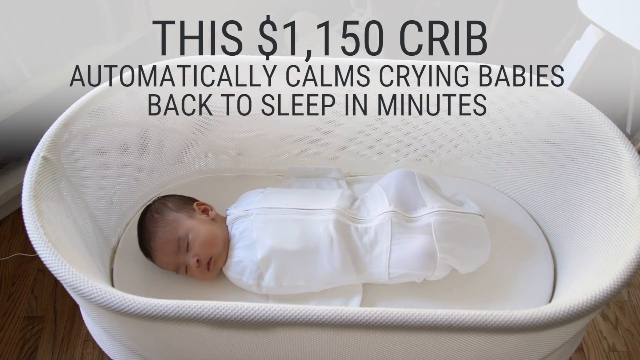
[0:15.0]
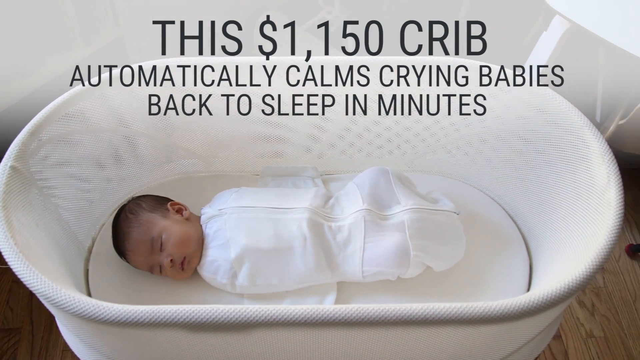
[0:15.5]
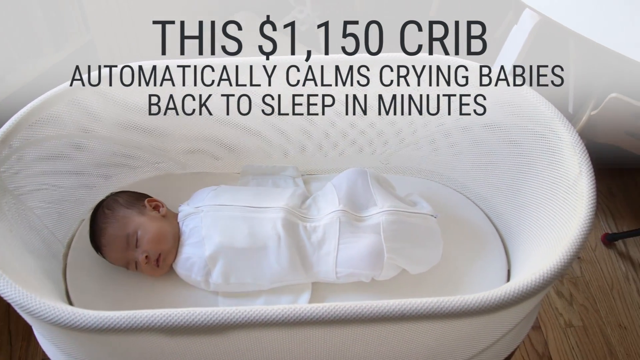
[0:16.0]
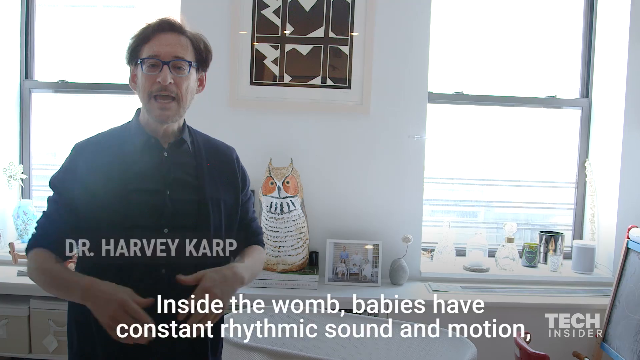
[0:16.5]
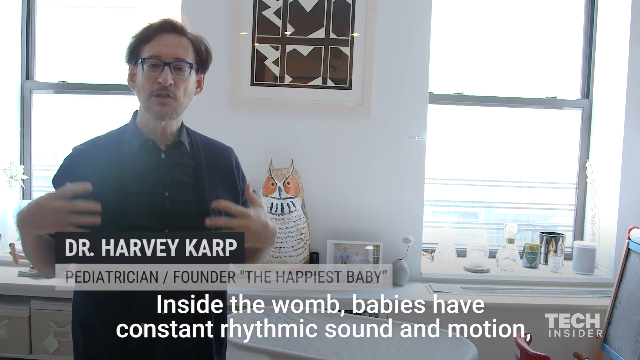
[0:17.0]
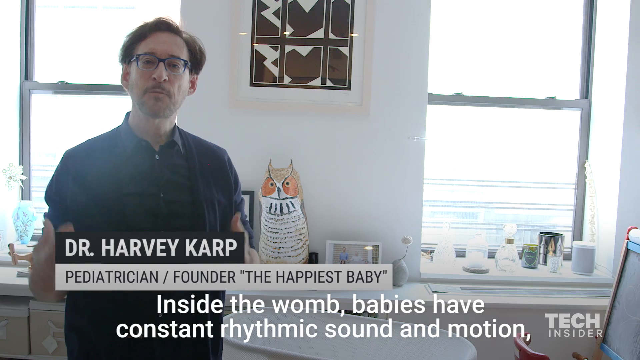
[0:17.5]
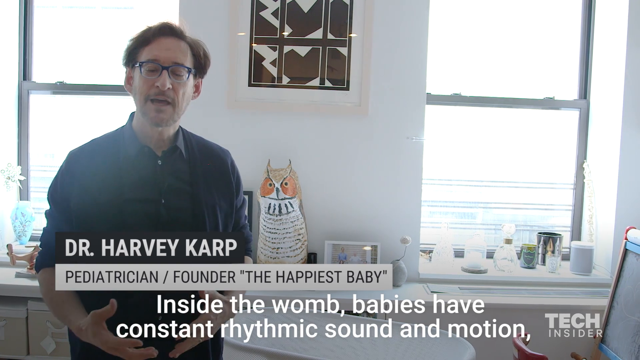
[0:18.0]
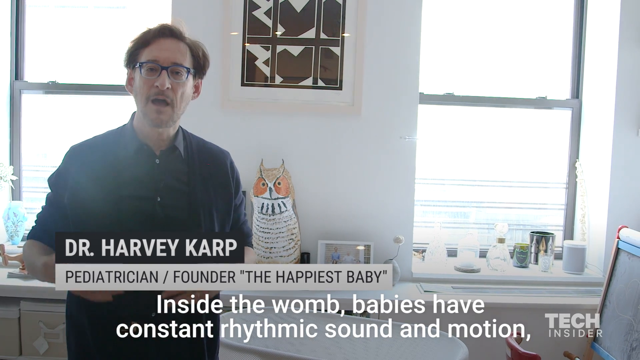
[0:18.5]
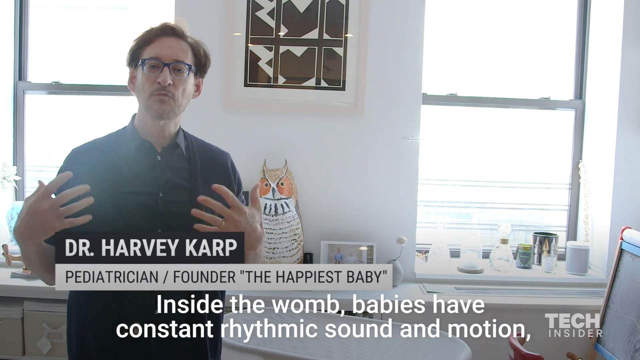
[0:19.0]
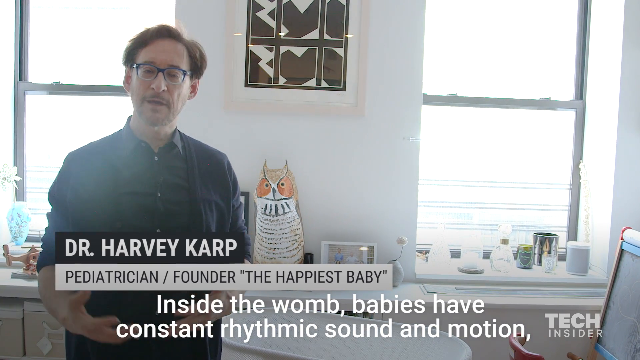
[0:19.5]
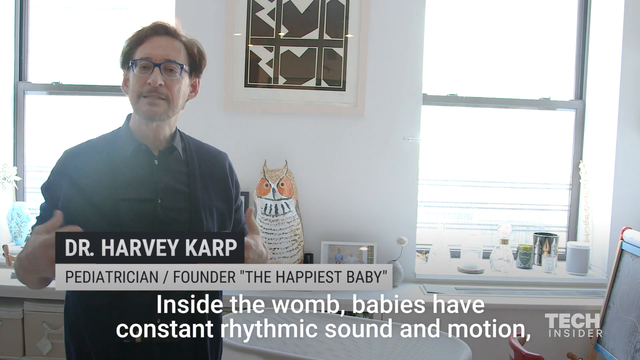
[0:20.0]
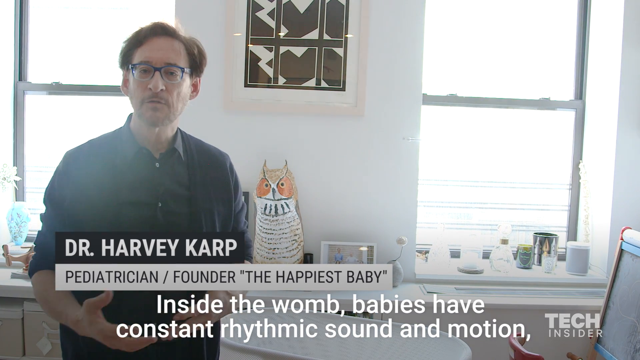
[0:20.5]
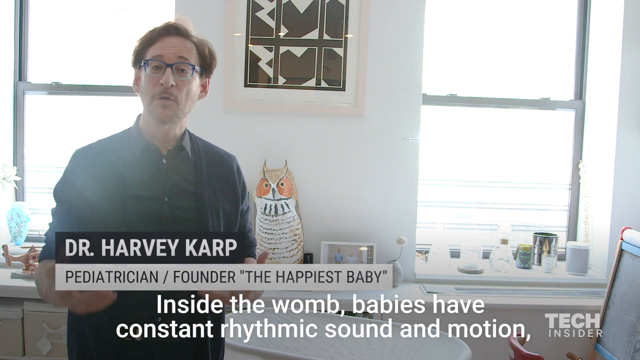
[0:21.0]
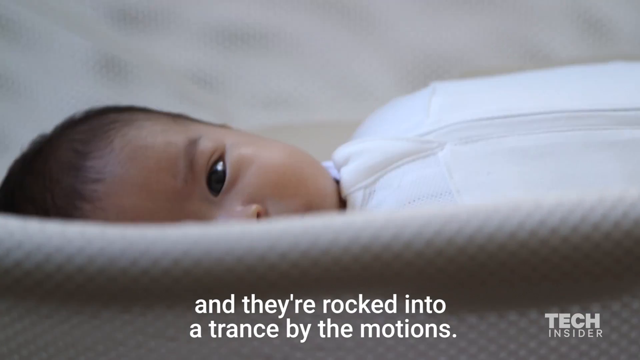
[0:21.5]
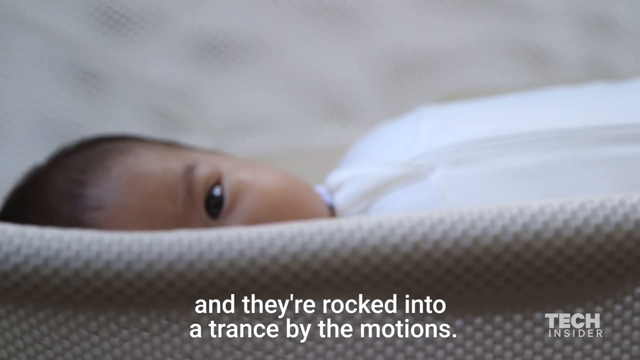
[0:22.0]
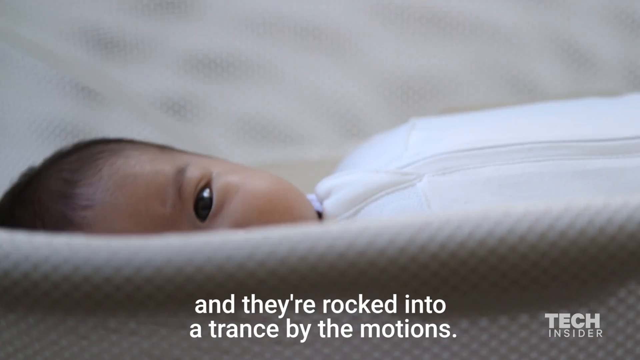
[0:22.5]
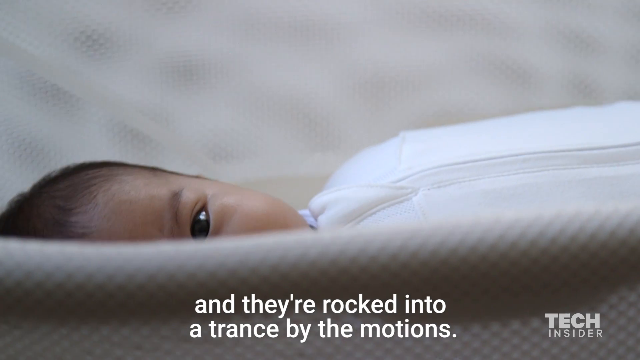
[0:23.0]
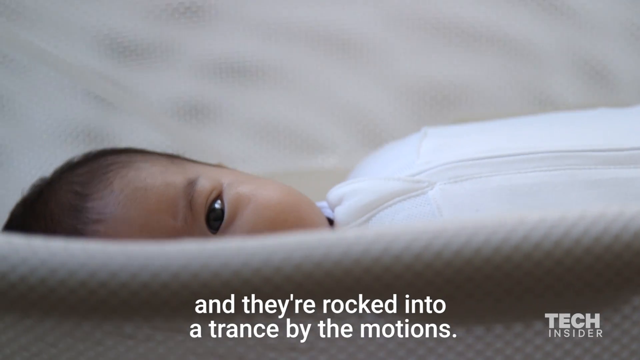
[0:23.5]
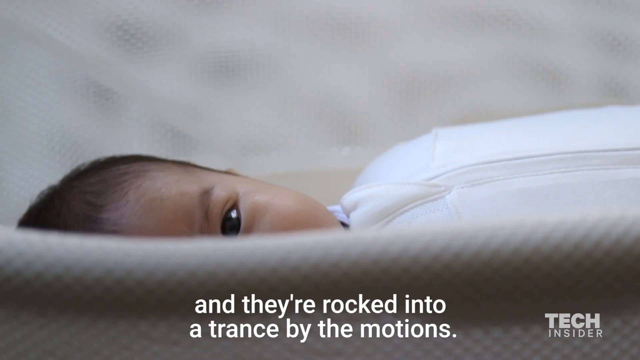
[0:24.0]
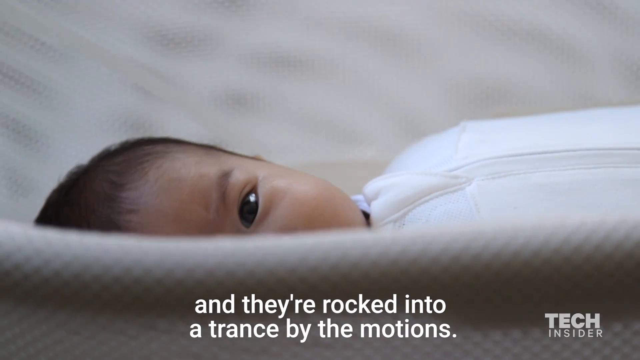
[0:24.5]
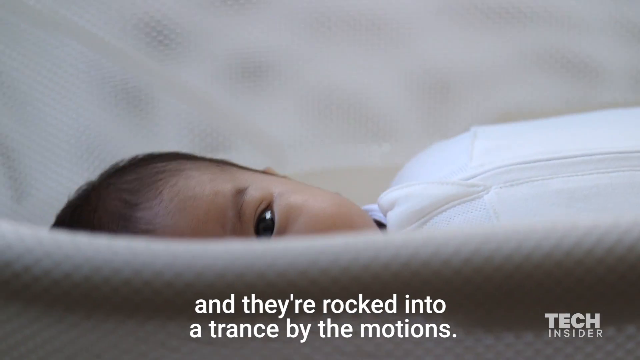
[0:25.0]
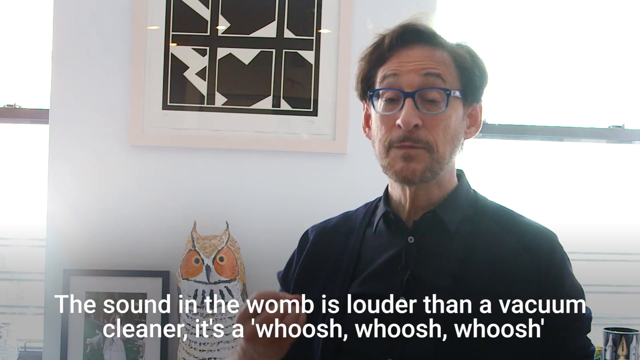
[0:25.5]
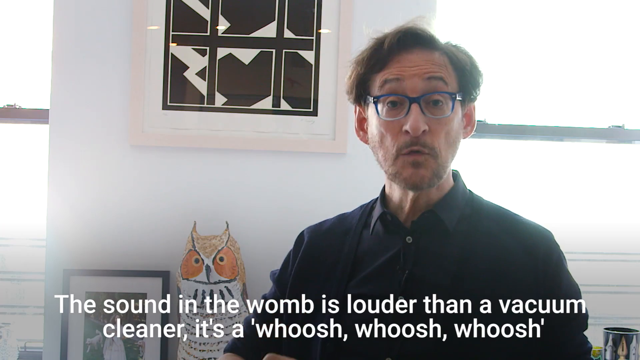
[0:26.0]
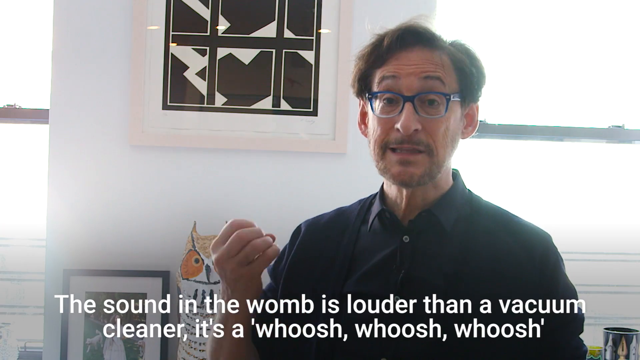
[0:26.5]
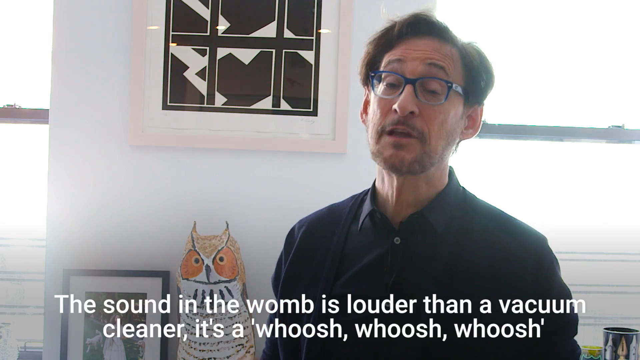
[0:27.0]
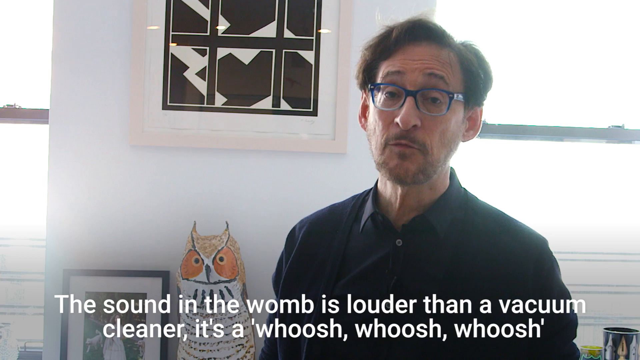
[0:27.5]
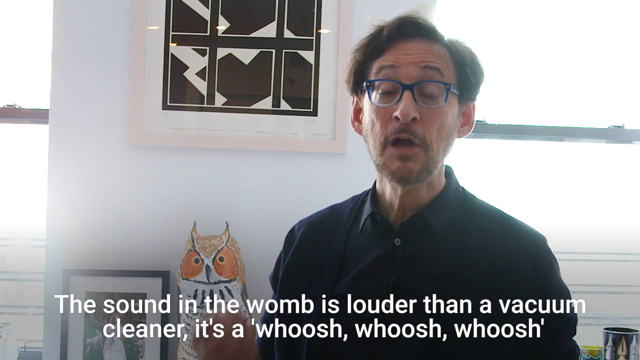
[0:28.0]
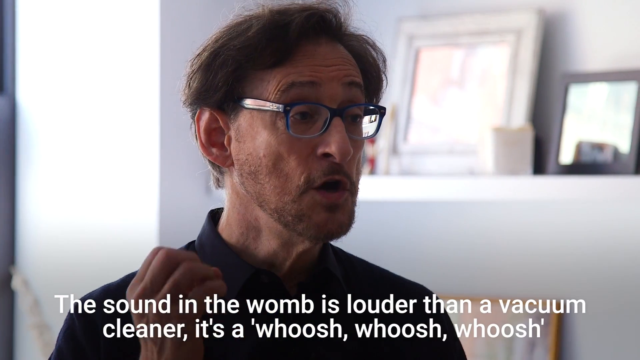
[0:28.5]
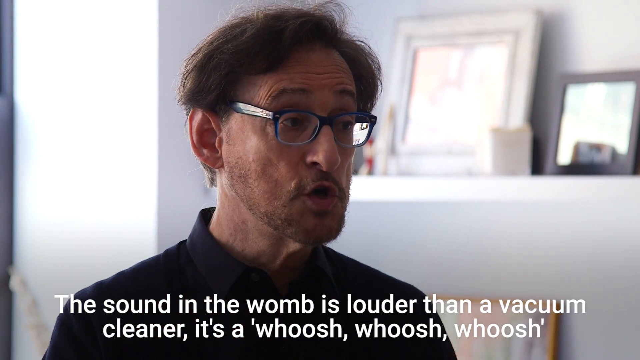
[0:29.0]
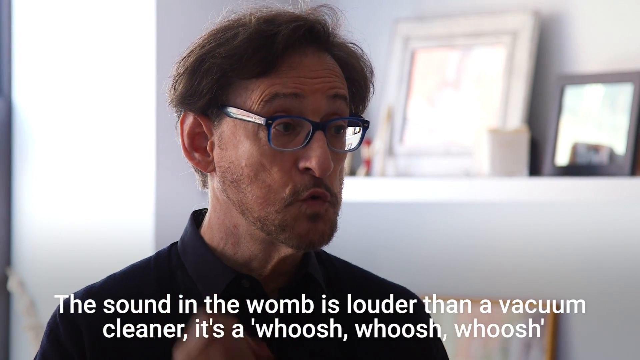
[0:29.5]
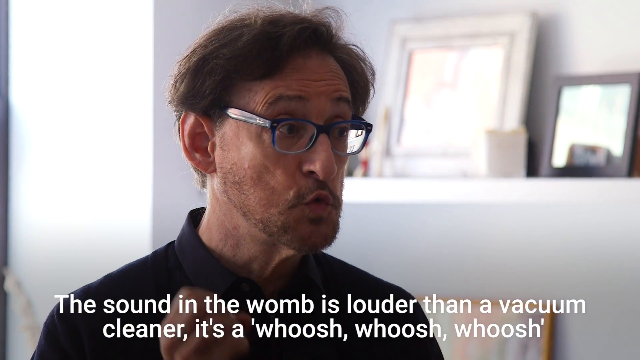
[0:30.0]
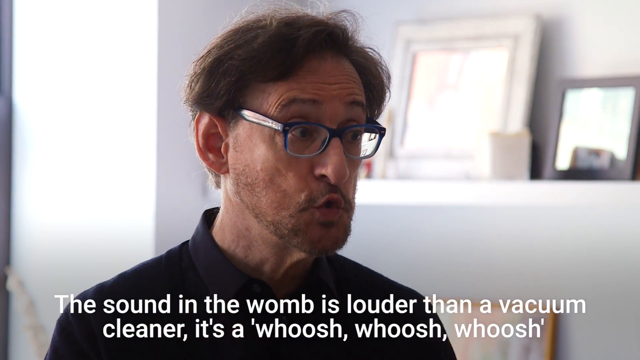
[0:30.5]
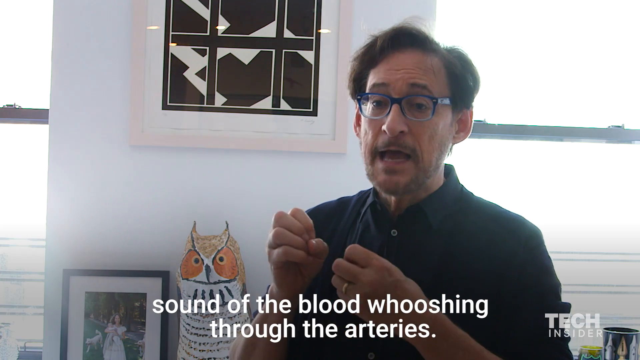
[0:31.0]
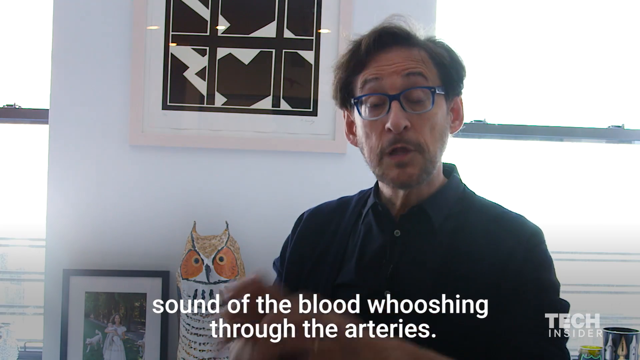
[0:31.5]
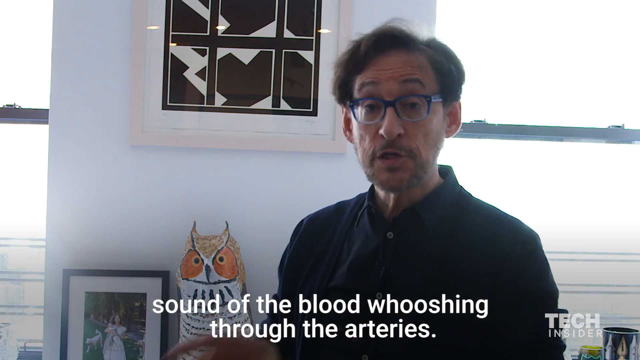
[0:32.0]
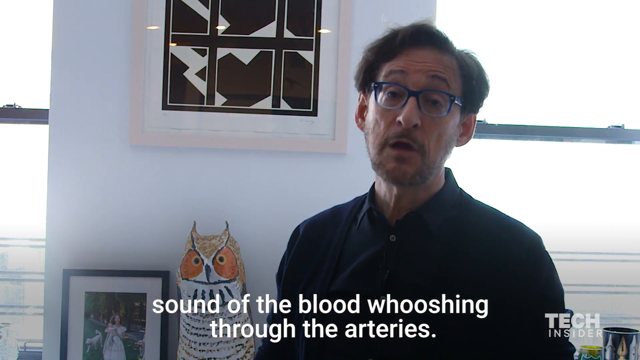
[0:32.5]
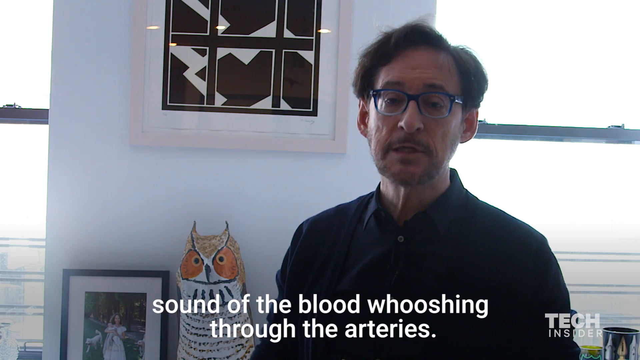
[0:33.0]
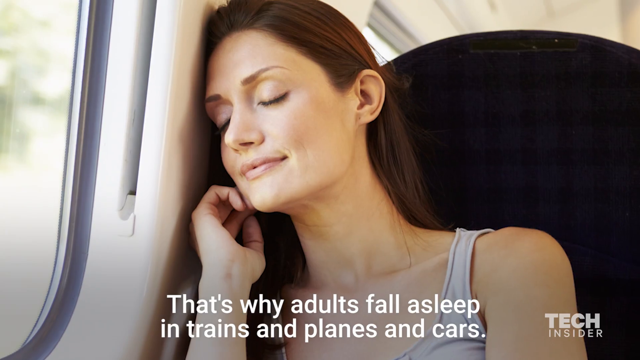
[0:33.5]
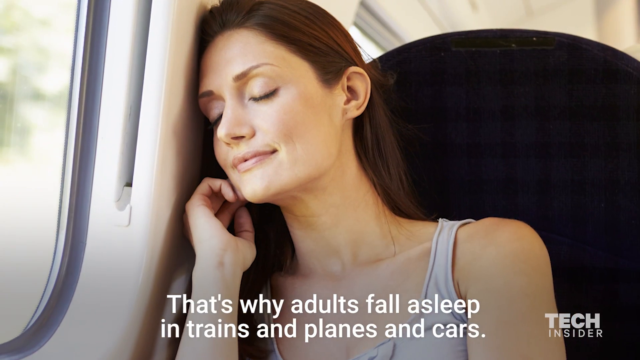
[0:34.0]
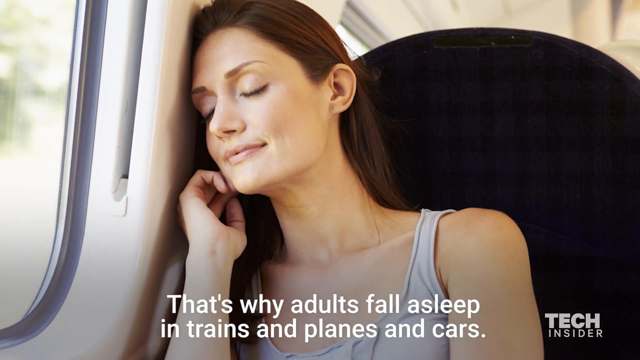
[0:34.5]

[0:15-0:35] A small baby cuddles and rocks back and forth inside a crib that appears to be rocking by itself. A man who appears to be Caucasian, wearing what appear to be blue glasses, talks to the screen and appears very enthusiastic. Behind him in the background is a plastic owl. Text reads "Dr. Harvey Karp, Pediatrician." The Insider Tech logo is in the bottom right portion of the screen. There is also an AI-generated image of a woman sleeping inside a bus.